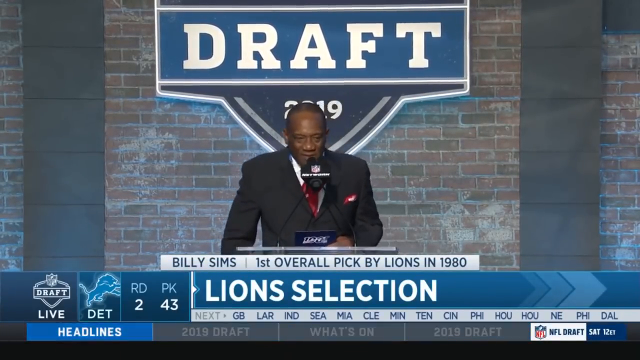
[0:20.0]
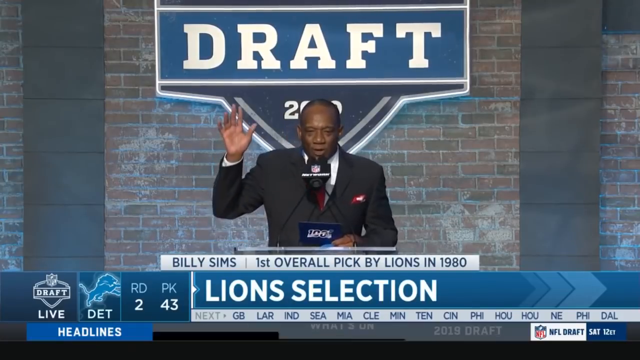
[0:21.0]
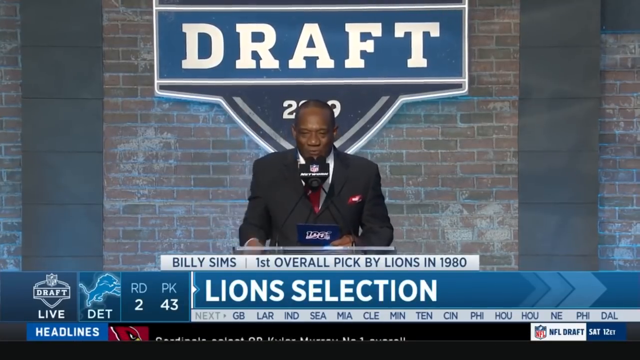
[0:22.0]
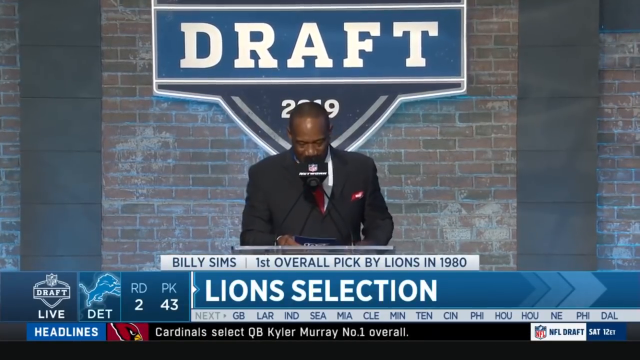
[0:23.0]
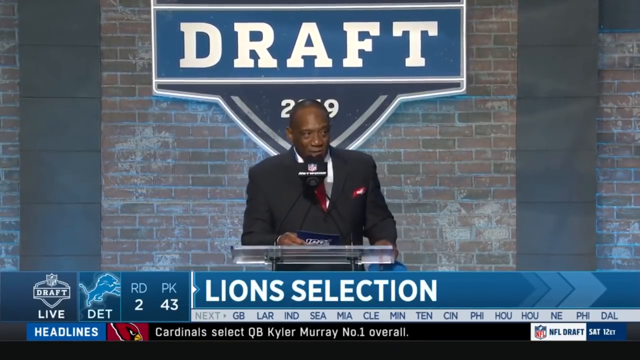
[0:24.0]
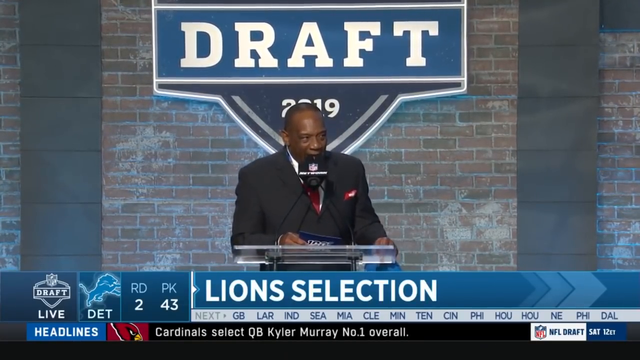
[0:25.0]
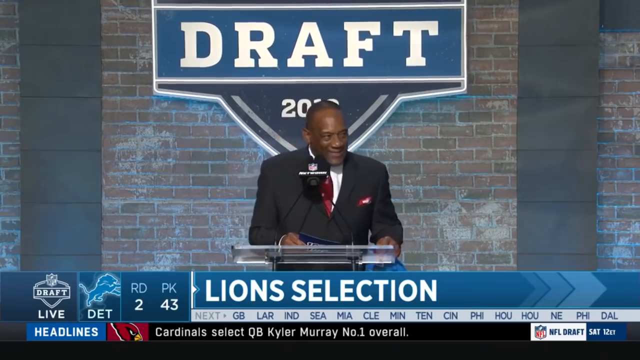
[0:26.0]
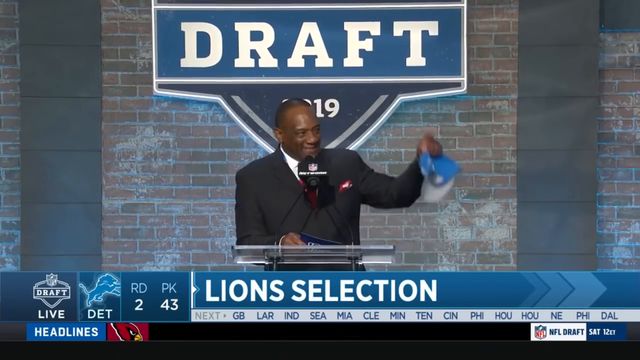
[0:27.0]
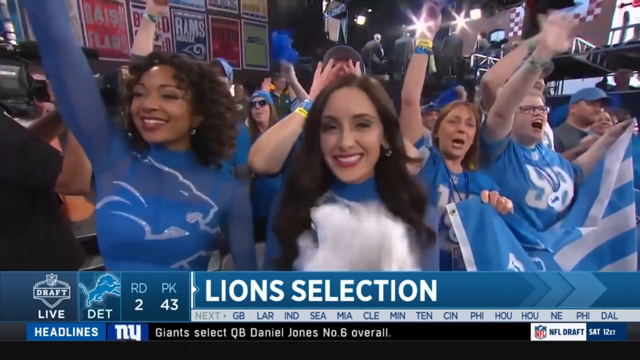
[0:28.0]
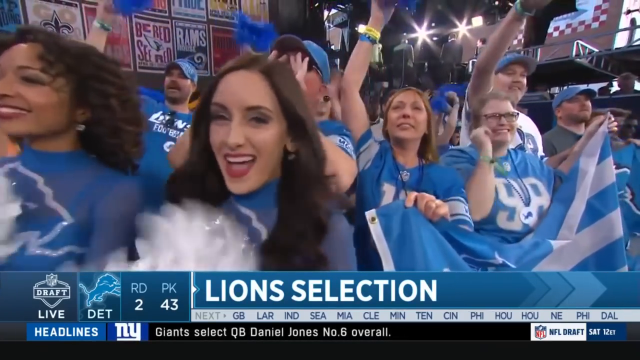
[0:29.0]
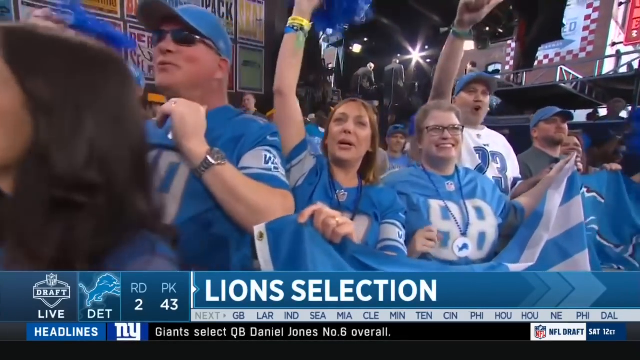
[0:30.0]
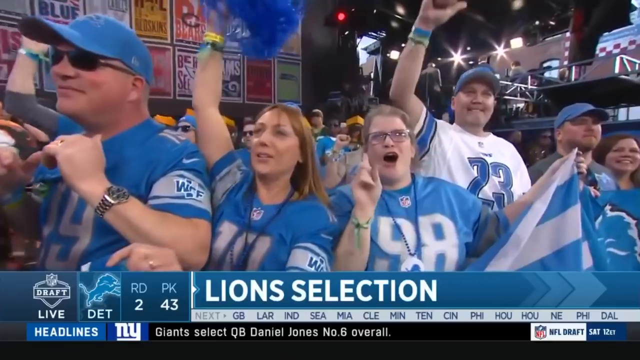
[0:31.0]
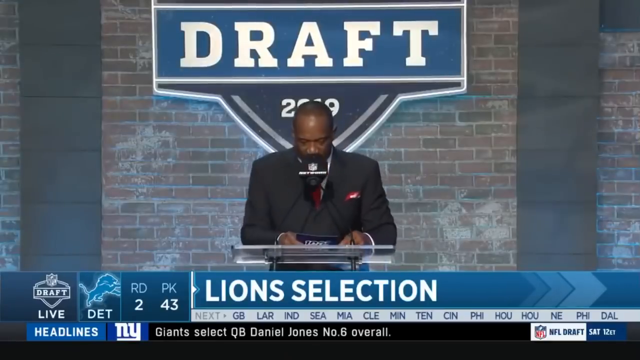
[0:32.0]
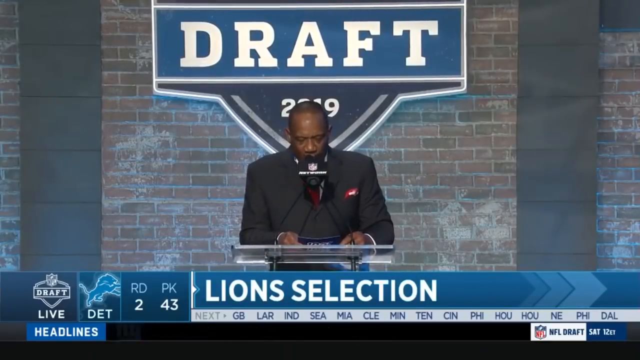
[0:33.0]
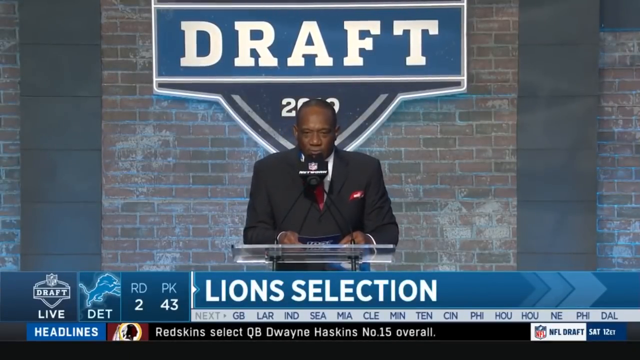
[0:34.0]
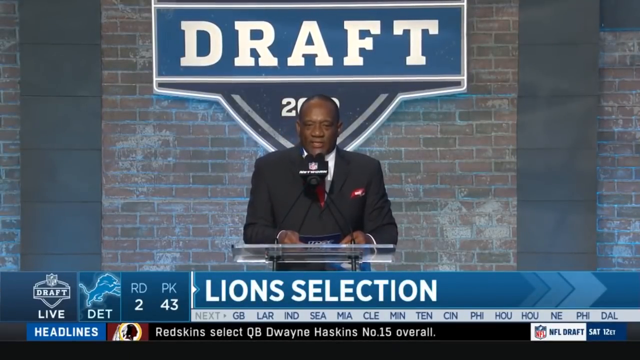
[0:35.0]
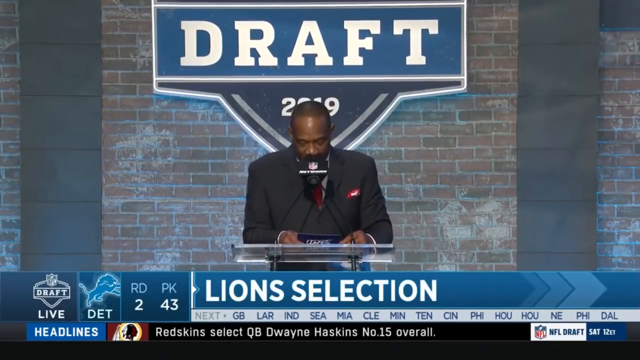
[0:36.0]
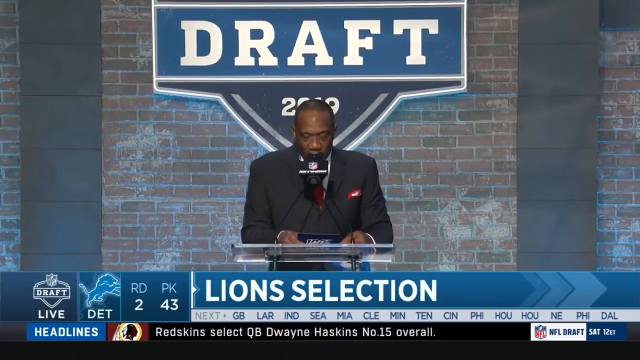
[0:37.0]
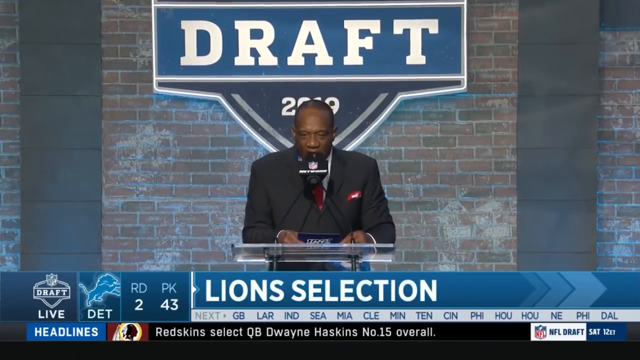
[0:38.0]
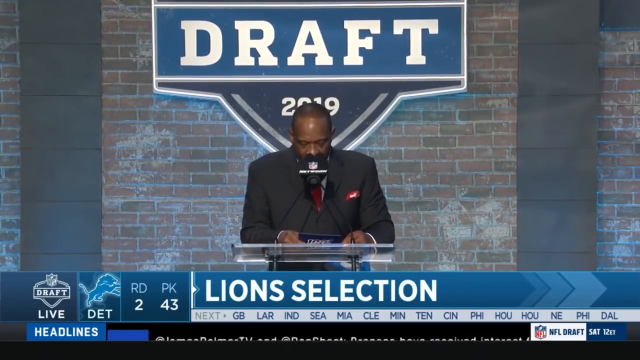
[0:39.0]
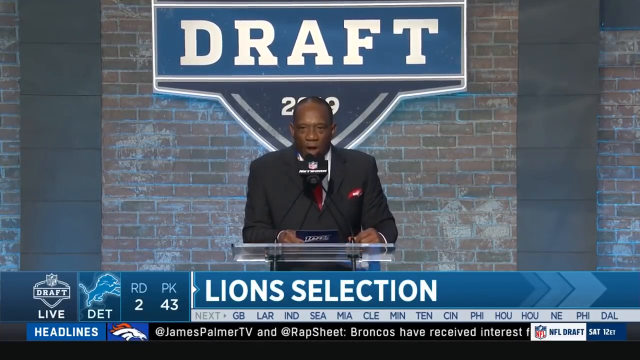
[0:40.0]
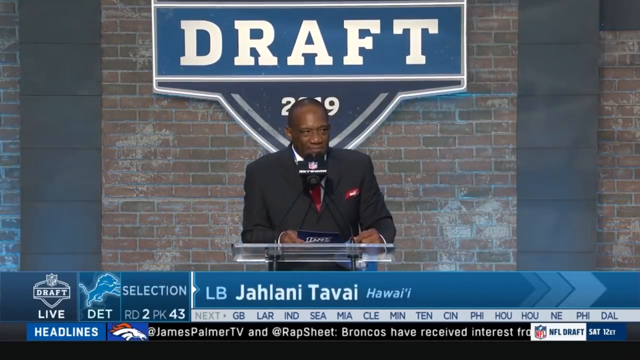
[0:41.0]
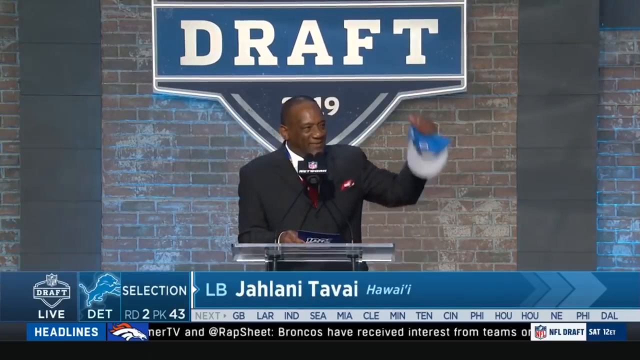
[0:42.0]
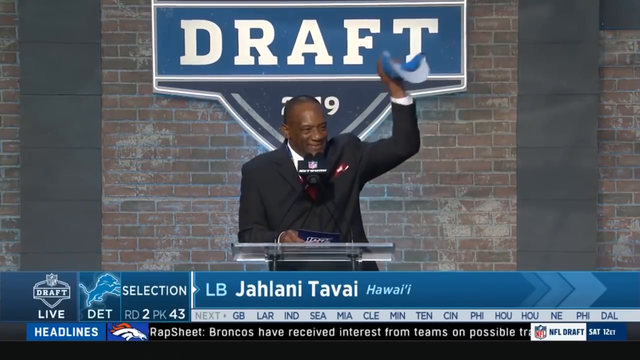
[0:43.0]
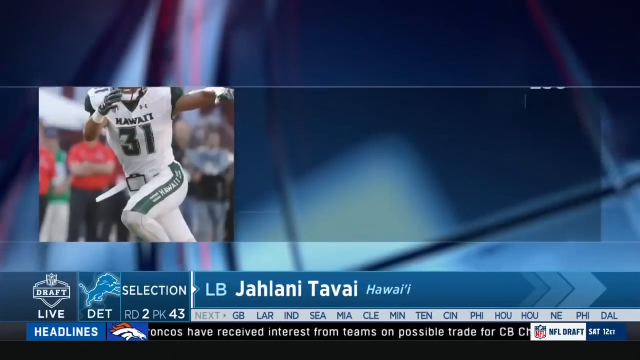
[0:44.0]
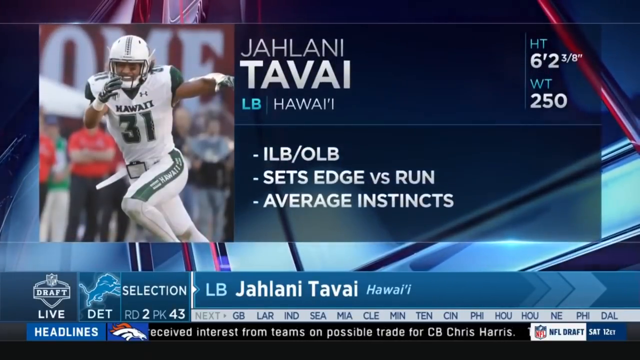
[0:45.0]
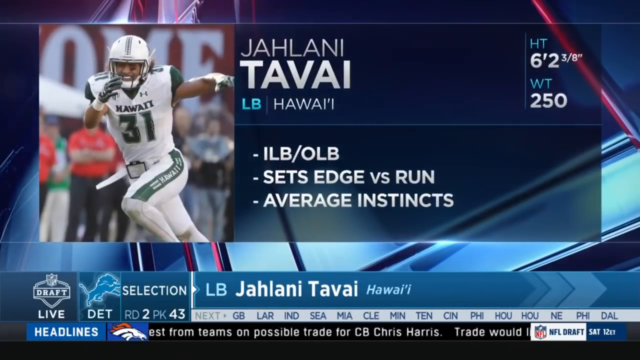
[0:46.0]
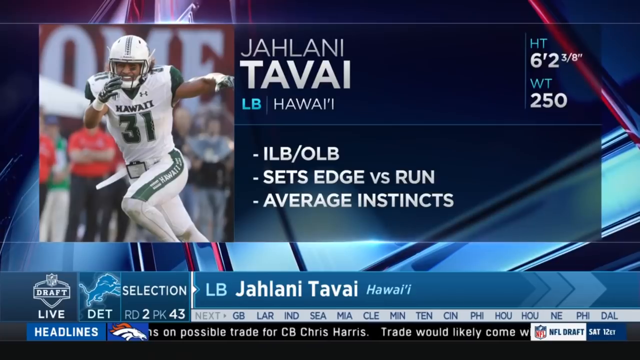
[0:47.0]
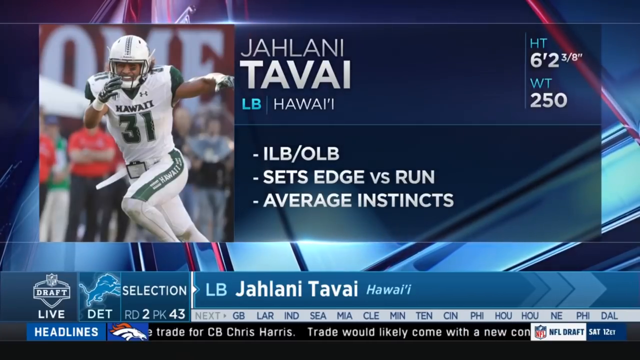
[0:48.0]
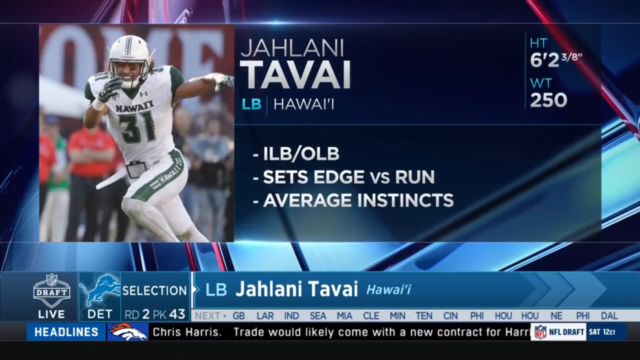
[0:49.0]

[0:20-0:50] At the bottom, "lion selection" is in white text on a blue background, and above it "Billy Sims first overall pick by the Lions" is in blue text on a white background. The man stands at the lectern, talking into the microphone and gesticulating, with kind of blue cards in his hand. "Draft" is still behind him, and it says "2019". He holds up a blue cap. The camera cuts to the crowd, where cheerleaders in blue have something like the lion crest on their fronts, and pans left to right over various Lions fans in Lions uniforms. It cuts back to the man at the lectern, who continues to talk into the microphone, looking down at the calling cards every now and again. The text at the bottom changes to "LB Jelani Tavai Hawaii" and he holds up the blue cap again. A graphic comes on screen of a player in a white and green uniform with a white helmet, reading "Jelani Tavai LB Hawaii", with a height beginning 6 foot 2, a weight of 250, and "ILB/OLB", "sets edge versus run" and "average instincts". There is a kind of ticker at the bottom.